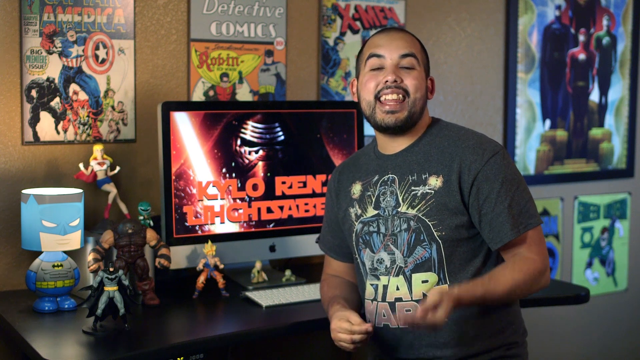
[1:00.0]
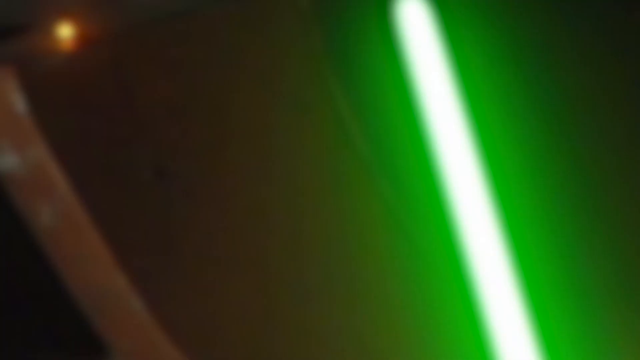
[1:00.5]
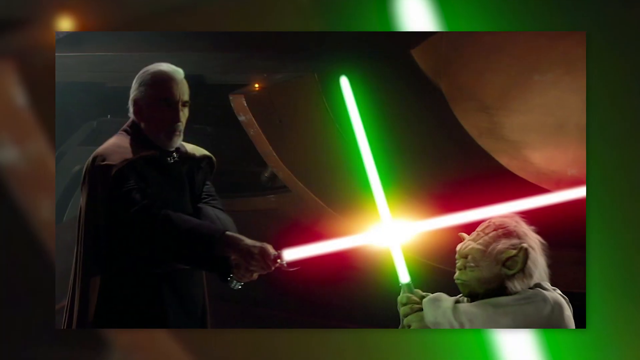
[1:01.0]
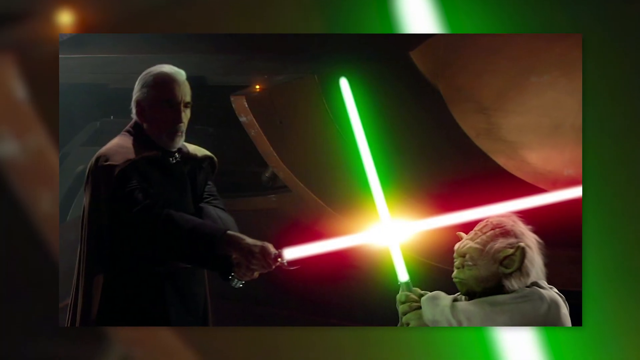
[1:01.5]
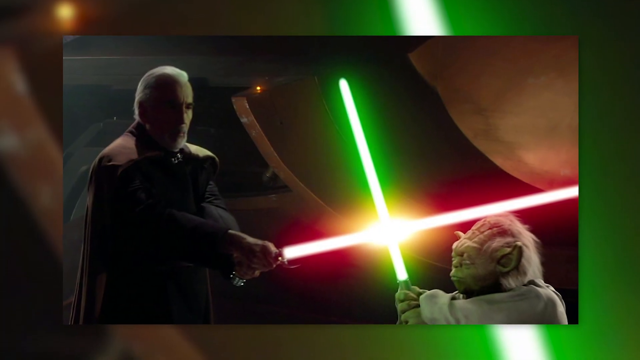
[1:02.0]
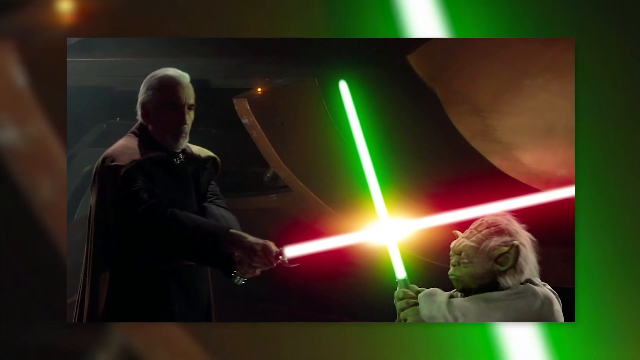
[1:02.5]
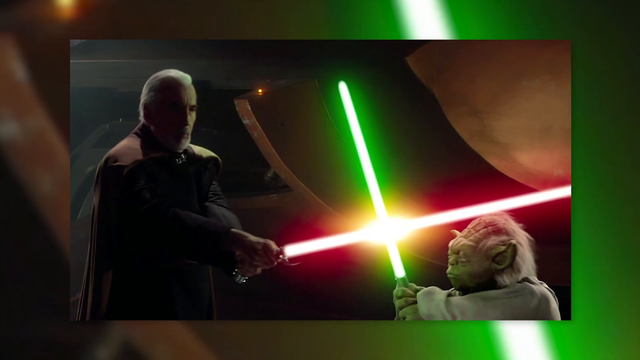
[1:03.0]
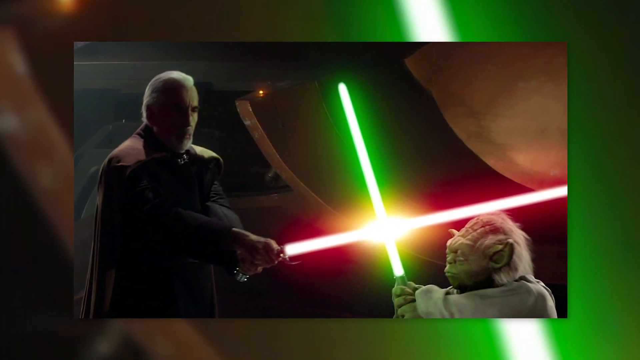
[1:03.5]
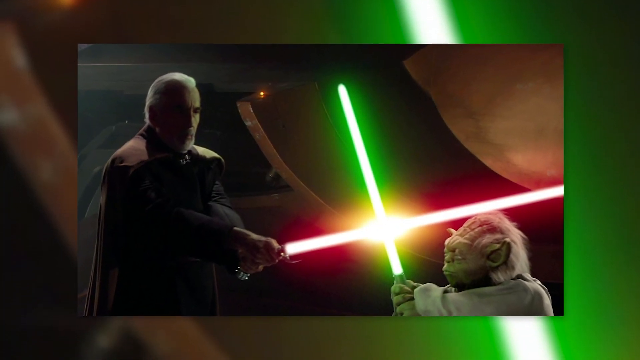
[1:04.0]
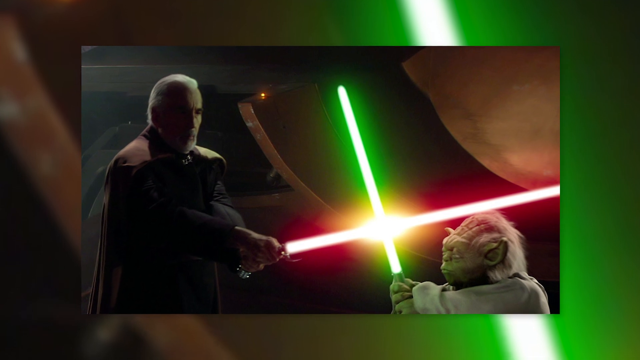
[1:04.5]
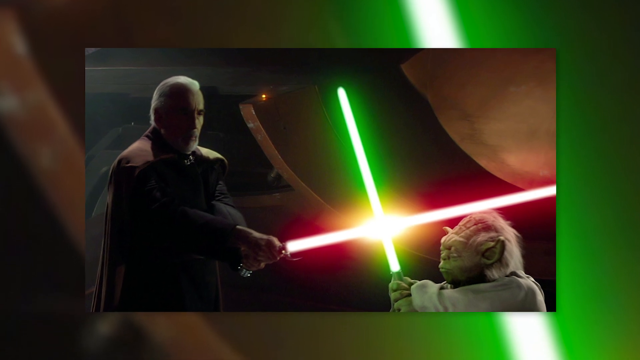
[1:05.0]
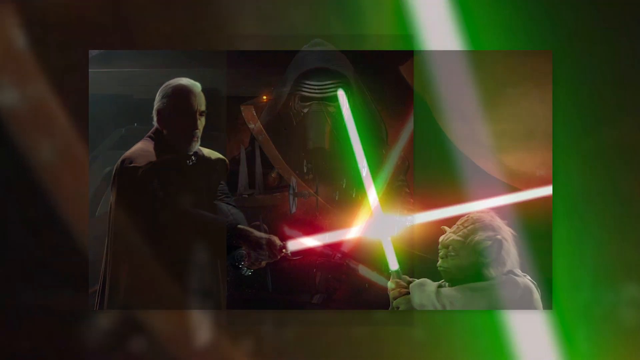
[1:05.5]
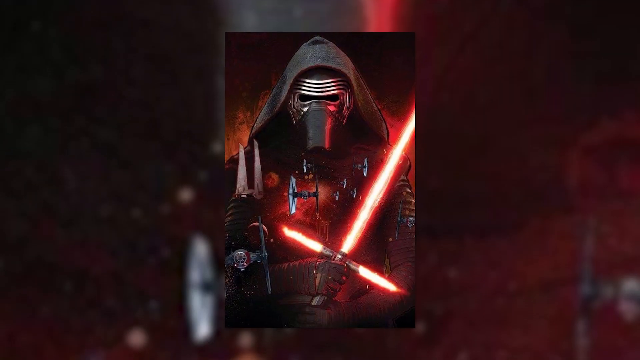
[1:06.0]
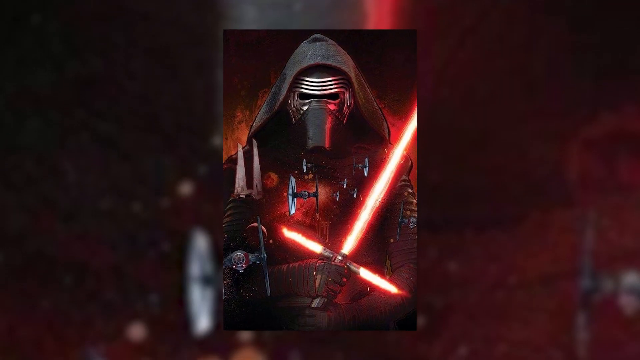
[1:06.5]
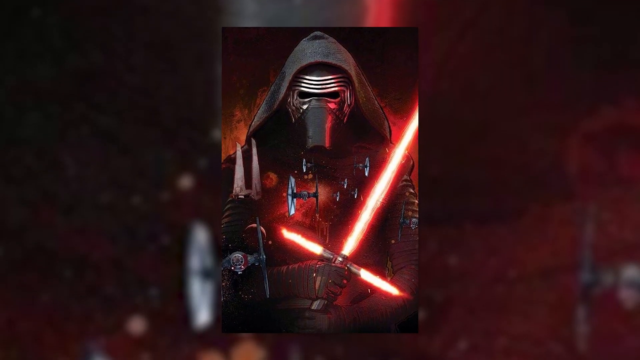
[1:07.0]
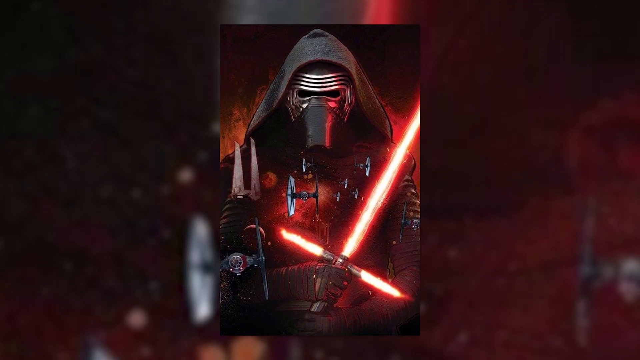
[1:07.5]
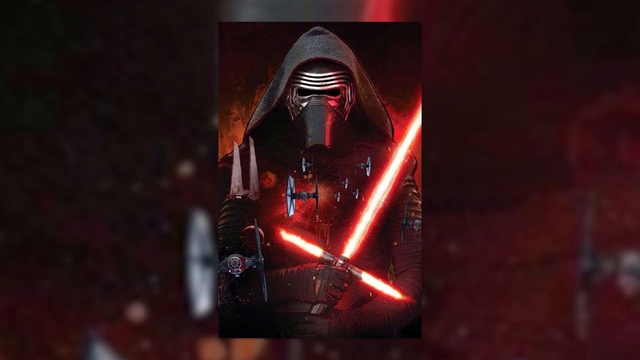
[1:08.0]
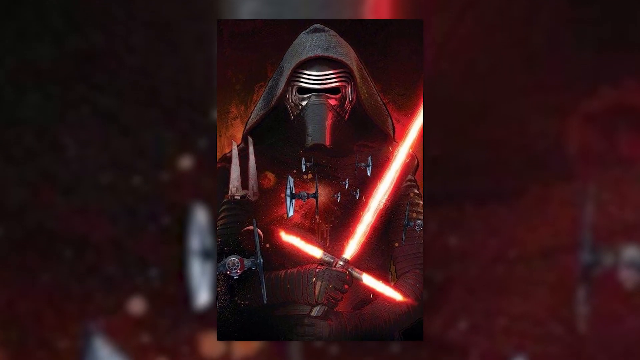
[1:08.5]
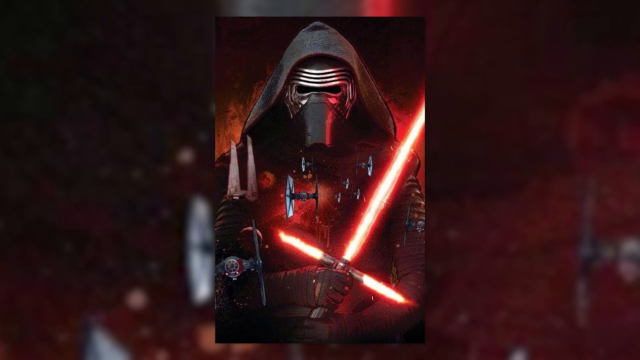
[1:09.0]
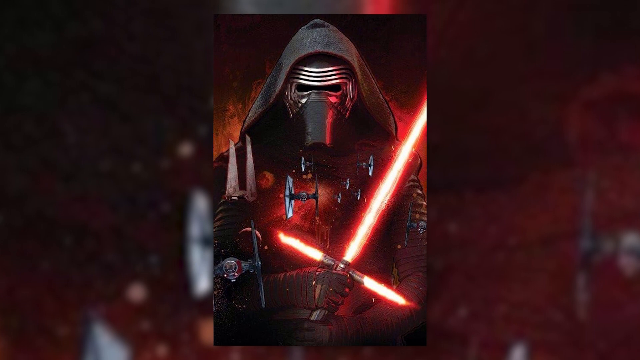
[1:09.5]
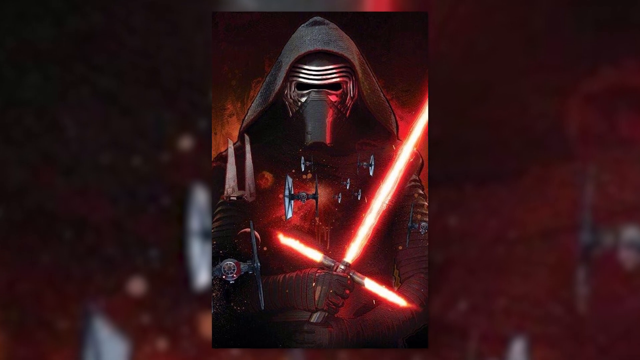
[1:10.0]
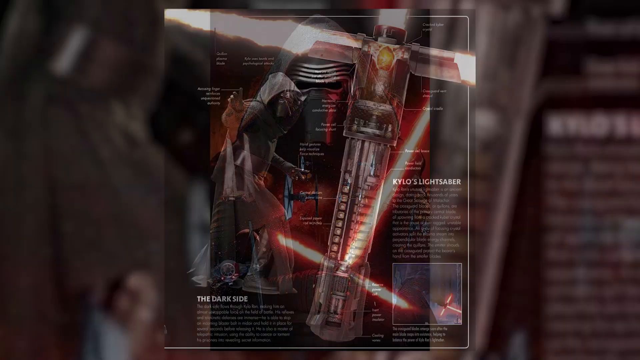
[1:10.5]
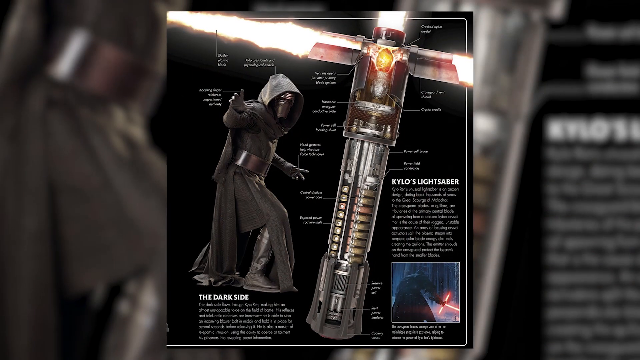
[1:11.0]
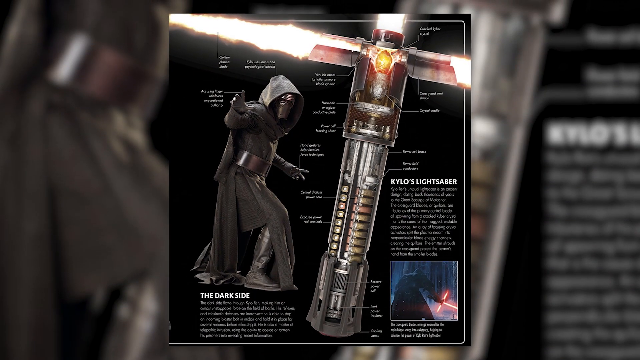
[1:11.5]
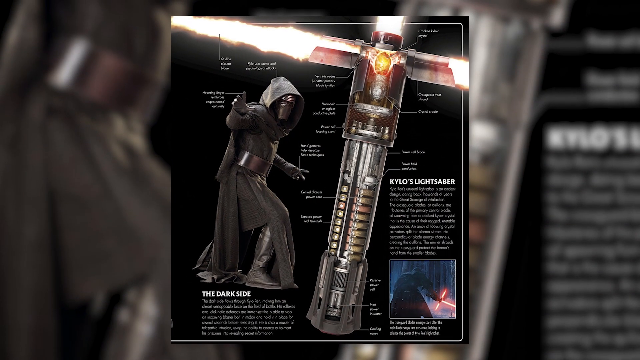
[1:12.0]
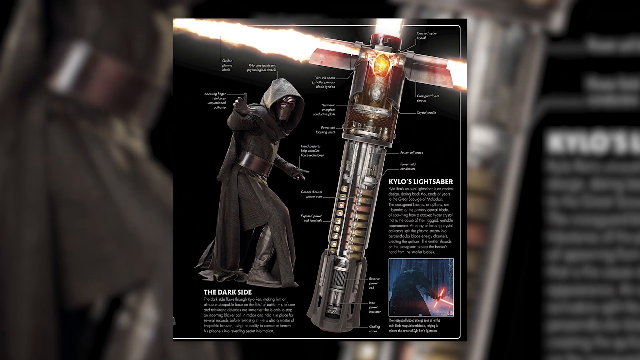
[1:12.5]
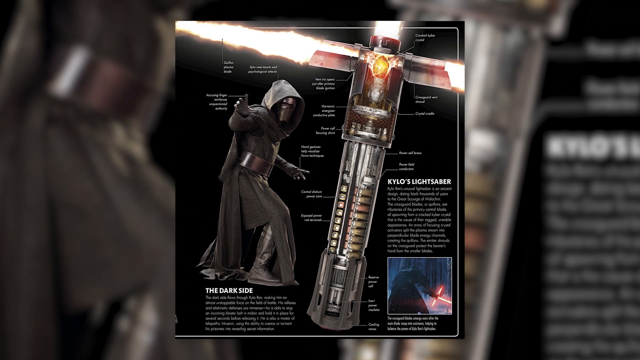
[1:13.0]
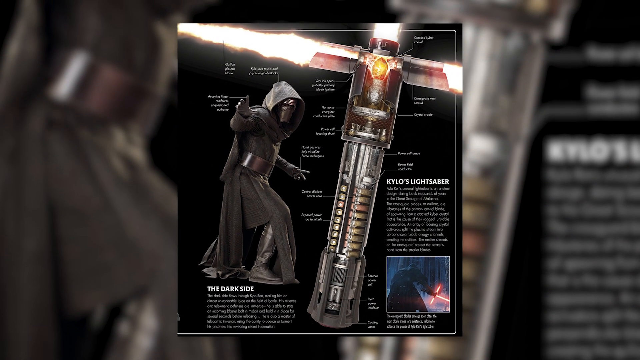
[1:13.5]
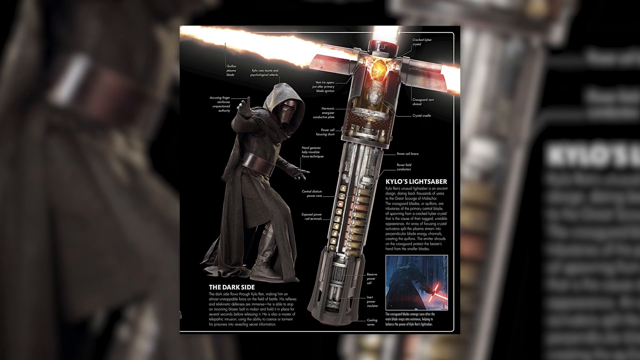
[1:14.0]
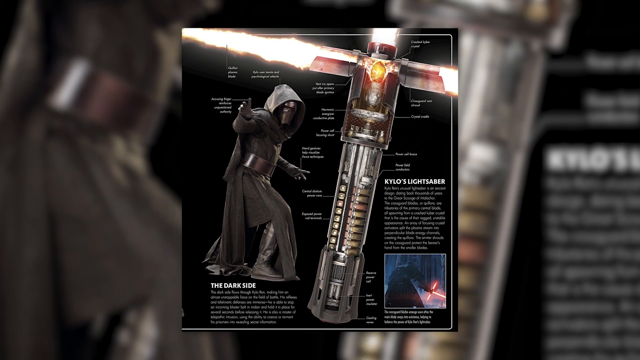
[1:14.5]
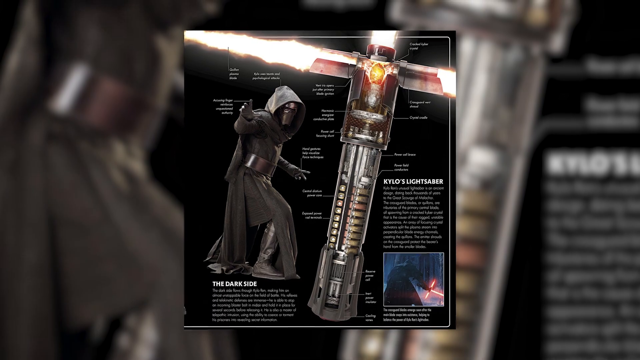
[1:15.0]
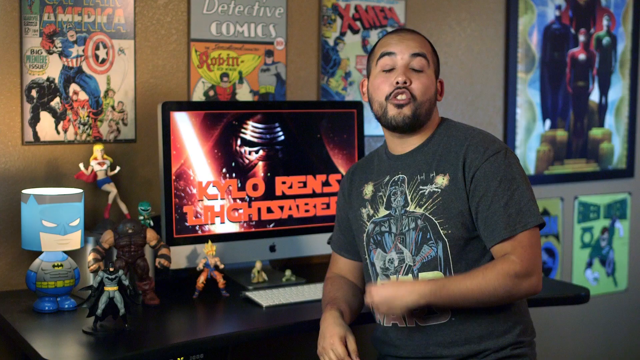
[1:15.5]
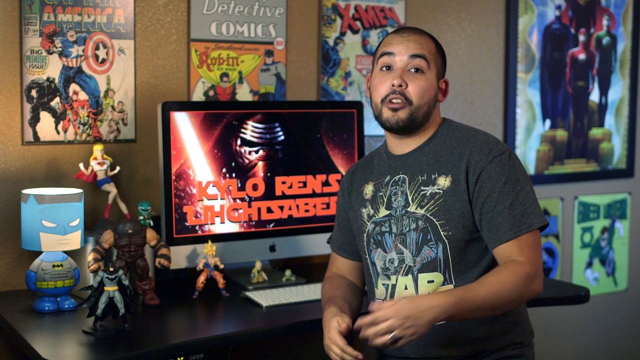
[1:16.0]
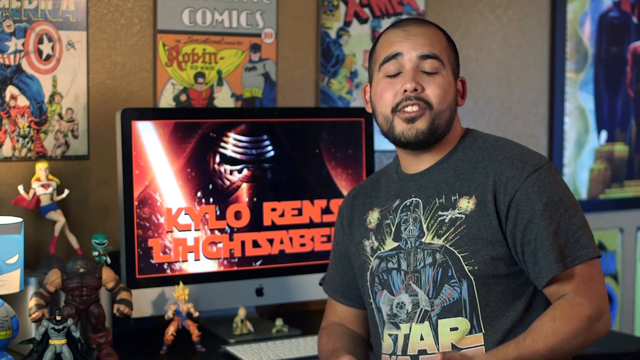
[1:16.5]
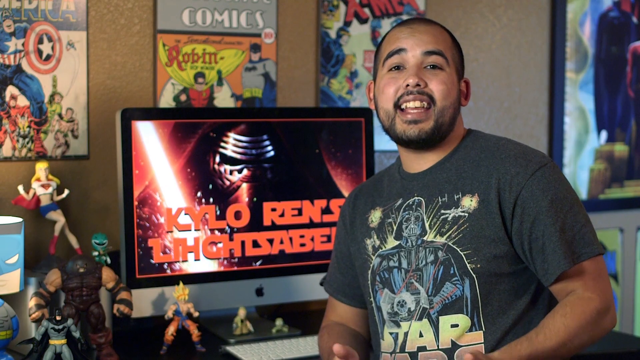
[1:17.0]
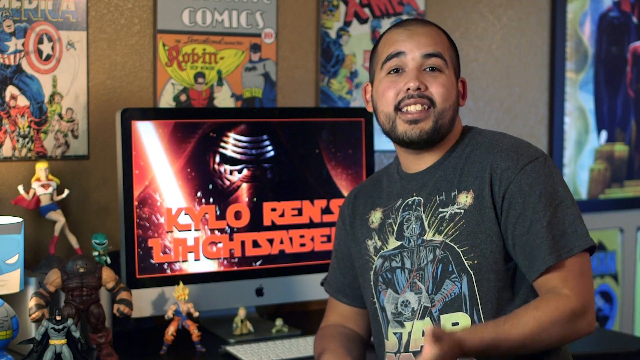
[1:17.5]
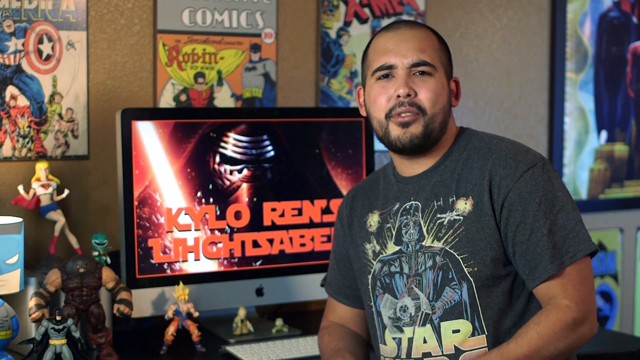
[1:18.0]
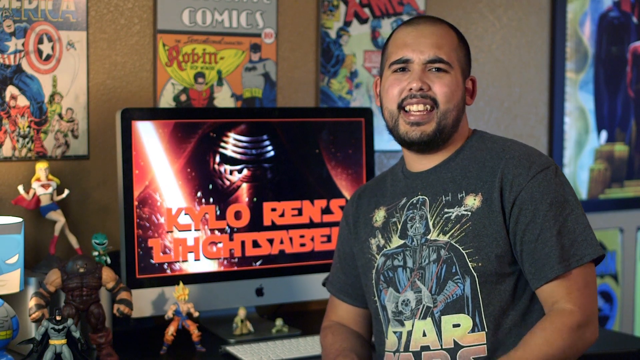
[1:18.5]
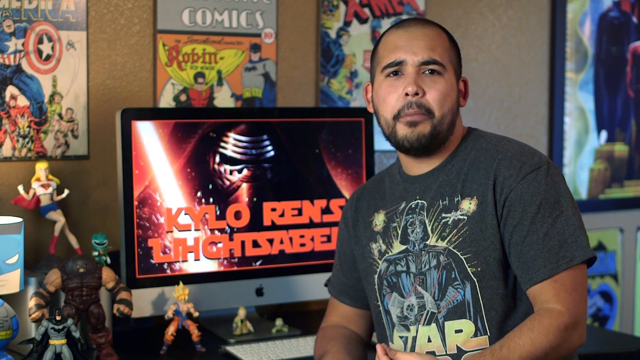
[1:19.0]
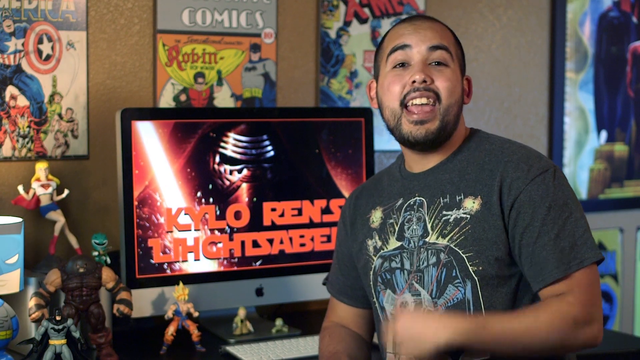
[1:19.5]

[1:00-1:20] The video was uploaded to YouTube by Variant Comics, as indicated by the flag in the top left of the frame: a blue-filled circle containing a blue shield outlined in white with a white V at the center. The lead image shows Kylo Ren wearing his black mask and hood with his red lightsaber deployed, with red text in a Star Wars-style font over him reading "Kylo Ren's lightsaber." The host appears to be a man of Hispanic heritage with brown skin and short black hair, wearing a black Star Wars shirt with a cartoon-style Darth Vader on it. He appears to be in a home office space. Behind him is the picture of Kylo Ren with "Kylo Ren's Lightsaber" over it, and a tan wall with enlarged, framed comic book images. Pictures from Star Wars films and other Star Wars artifacts are shown in what appears to be a Star Wars encyclopedia.